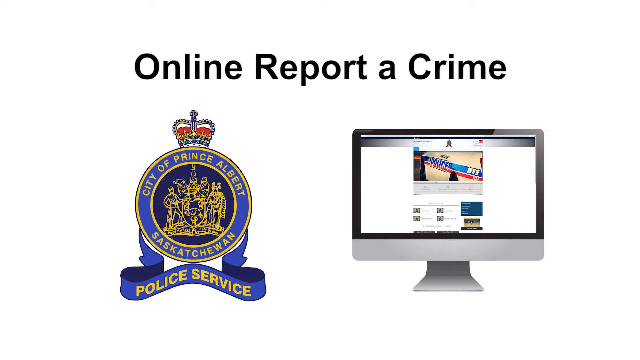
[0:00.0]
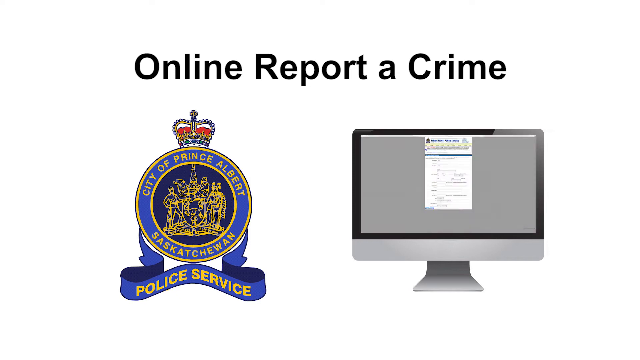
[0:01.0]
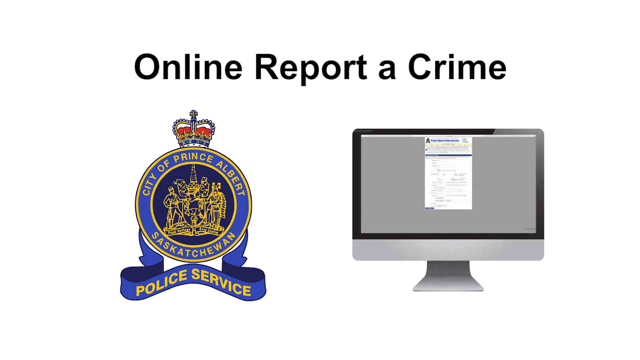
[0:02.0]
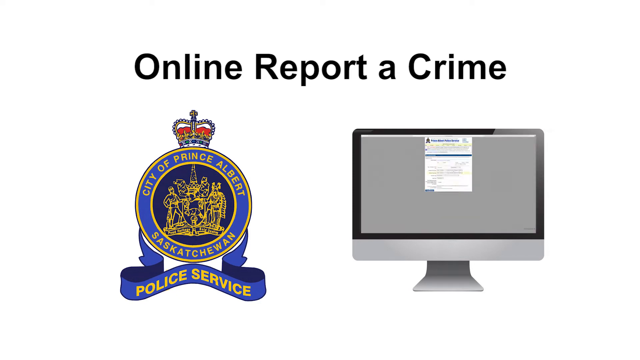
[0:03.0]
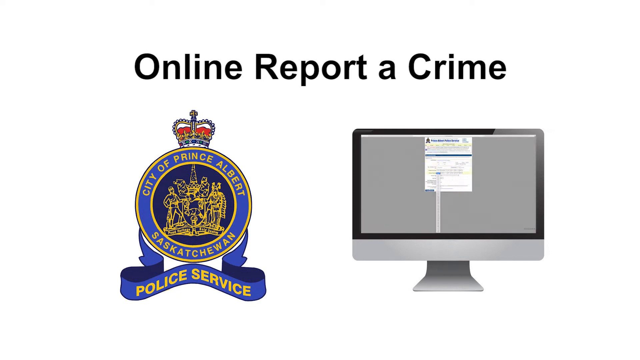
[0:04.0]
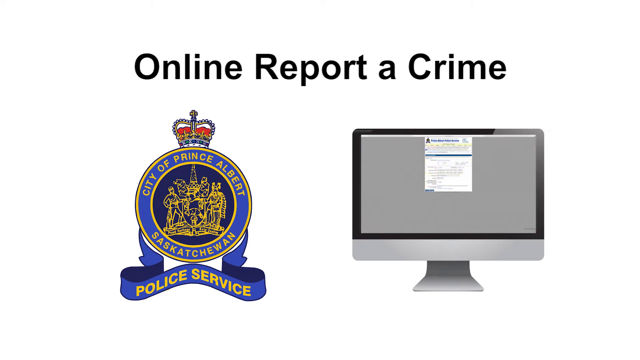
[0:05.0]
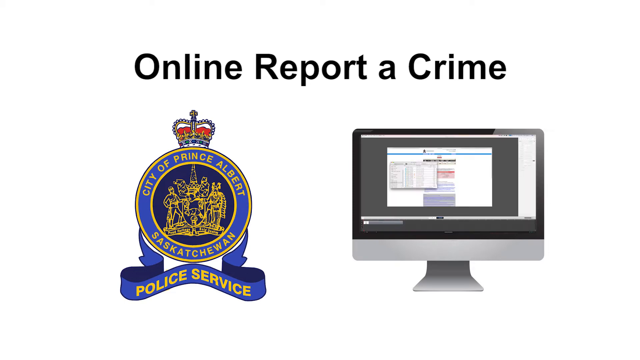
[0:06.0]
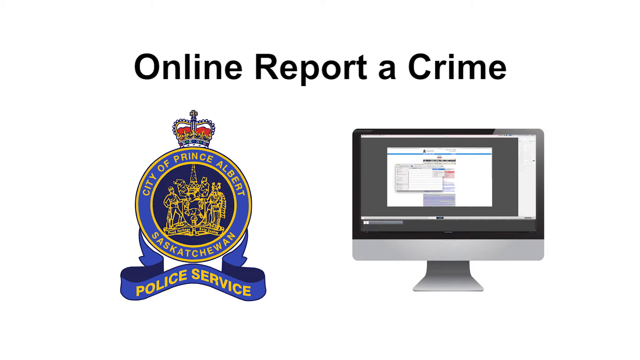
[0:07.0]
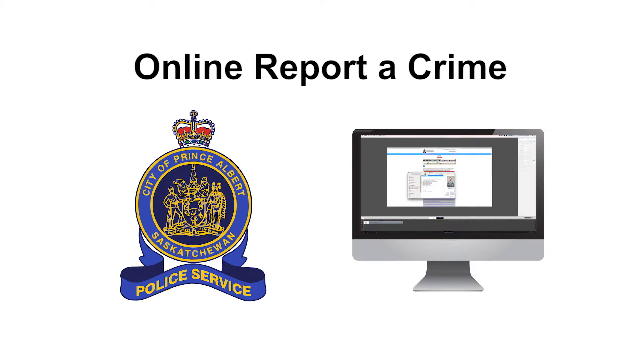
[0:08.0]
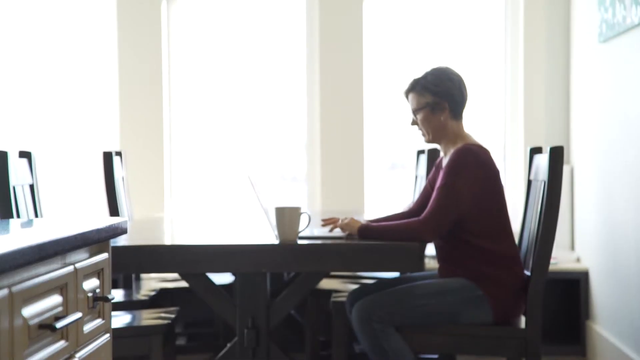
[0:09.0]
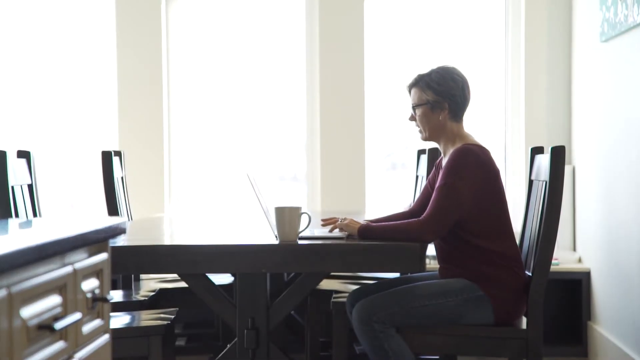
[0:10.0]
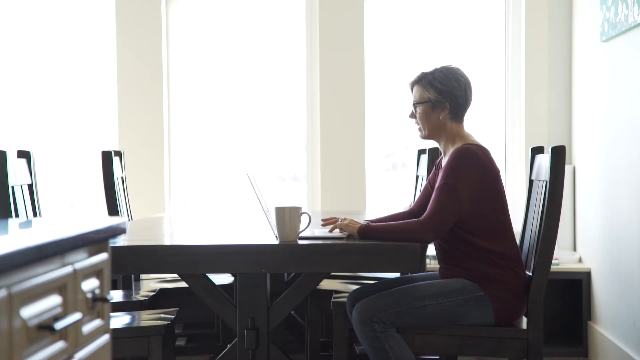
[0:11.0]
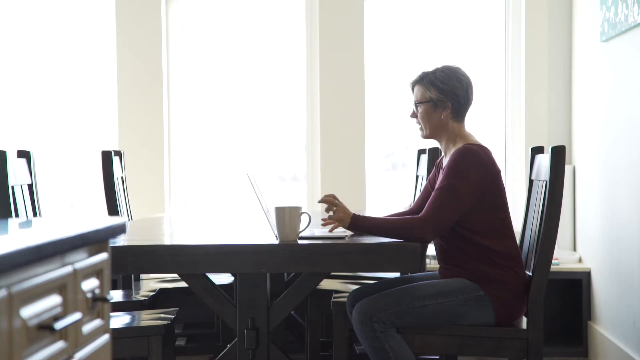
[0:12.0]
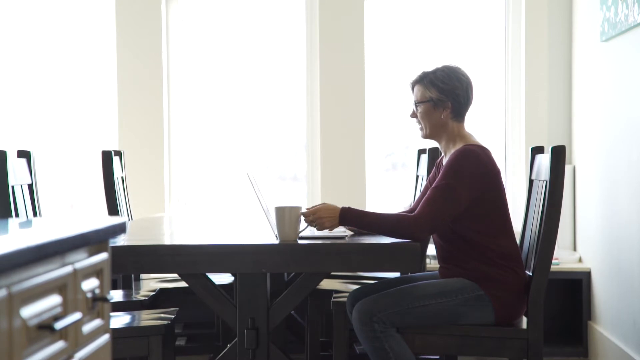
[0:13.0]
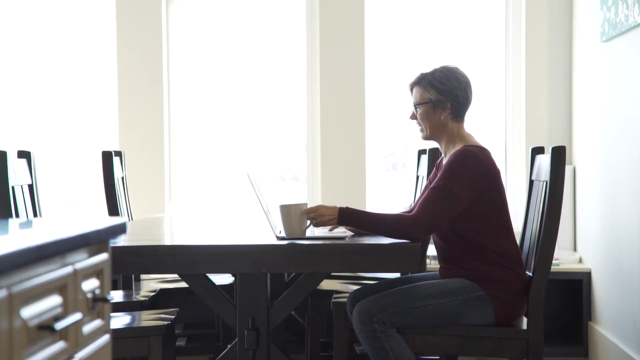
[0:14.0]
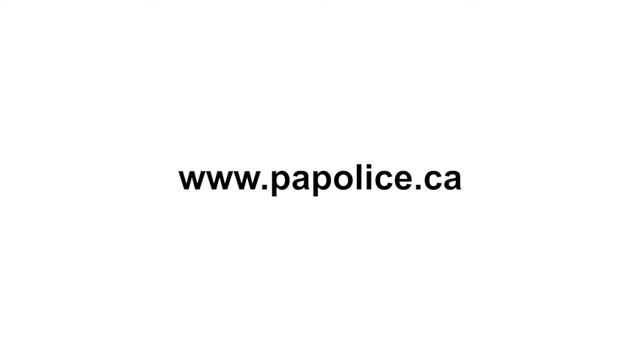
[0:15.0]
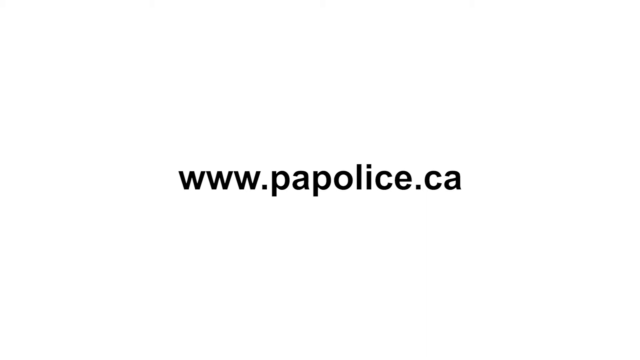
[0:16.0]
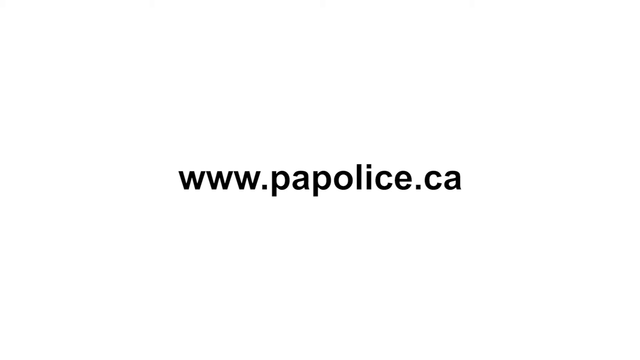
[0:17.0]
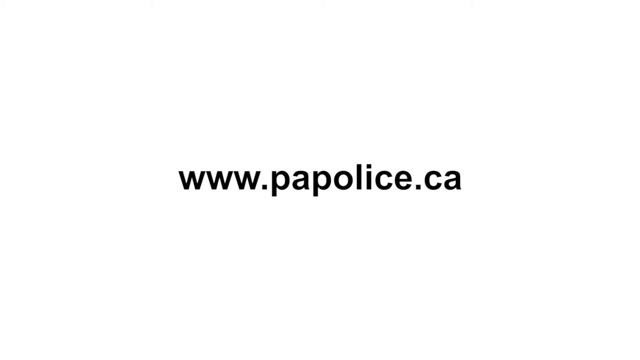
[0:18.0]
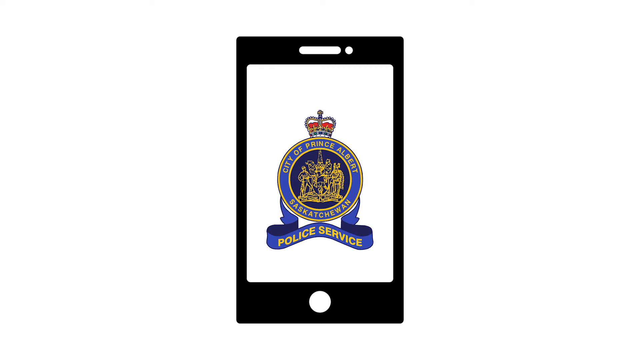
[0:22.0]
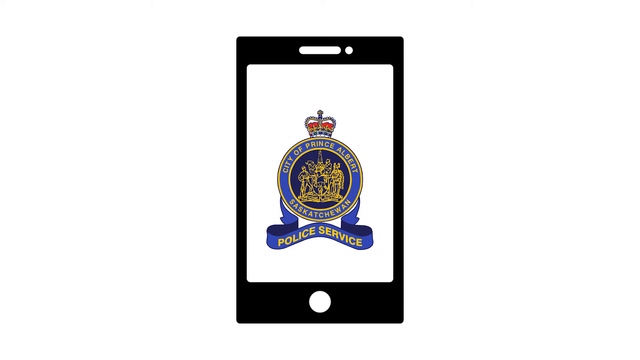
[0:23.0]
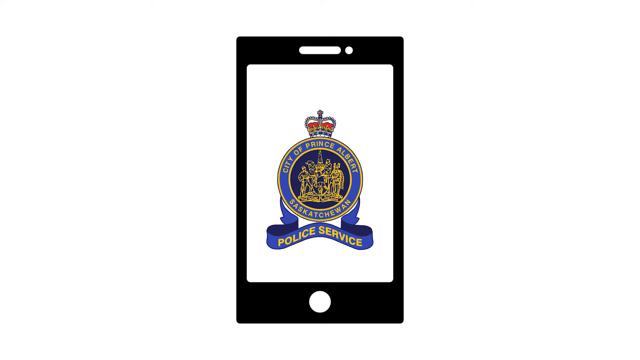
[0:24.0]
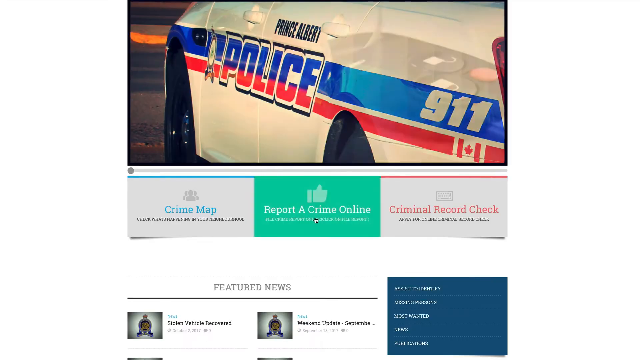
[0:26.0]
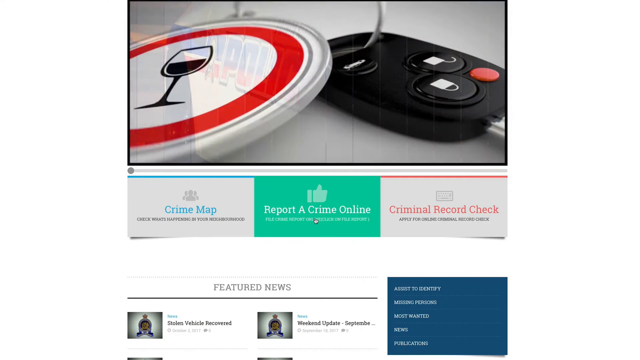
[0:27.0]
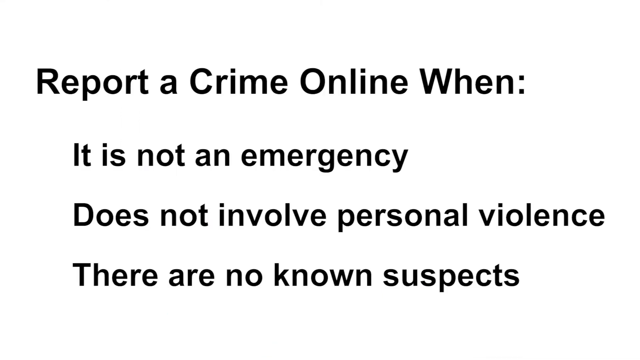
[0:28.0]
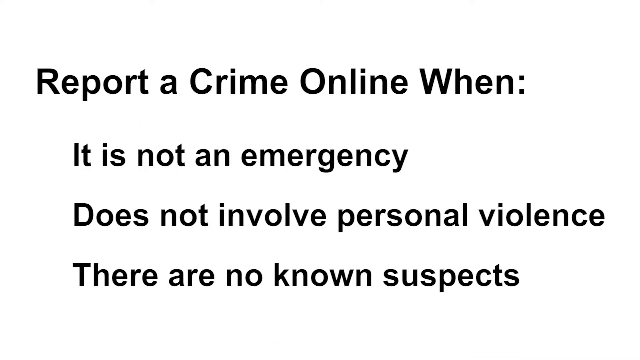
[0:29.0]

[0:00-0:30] An online crime reporting page shows the crest of the City of Prince Albert Police Service. An iMac computer appears, apparently displaying some information. A woman, probably in her 50s and wearing jeans, sits alone at a table with a cup of drink, working on her laptop. The web address "www.papolice.ca" appears. A mobile icon then appears, followed by a display of a car key and then a crime map. Options read "report a crime online" and "criminal record check", along with text stating to report a crime online "when it is not an emergency, does not involve personal violence, there are no known suspects."